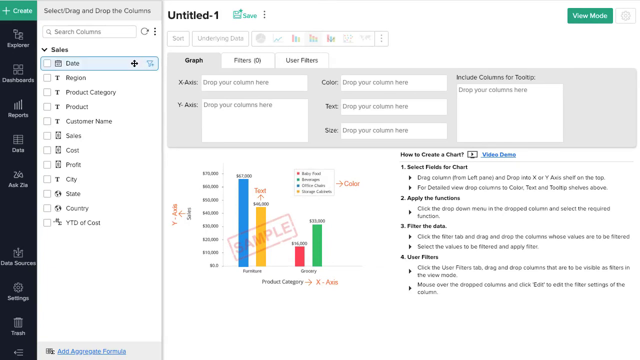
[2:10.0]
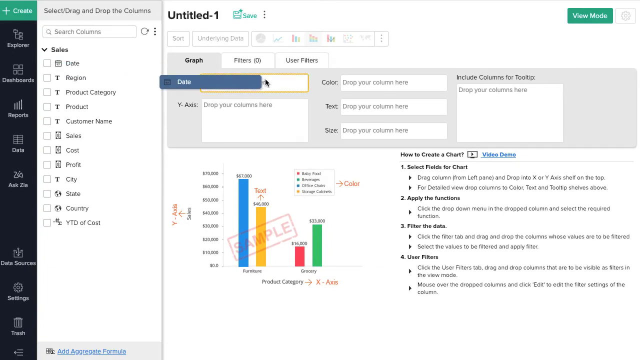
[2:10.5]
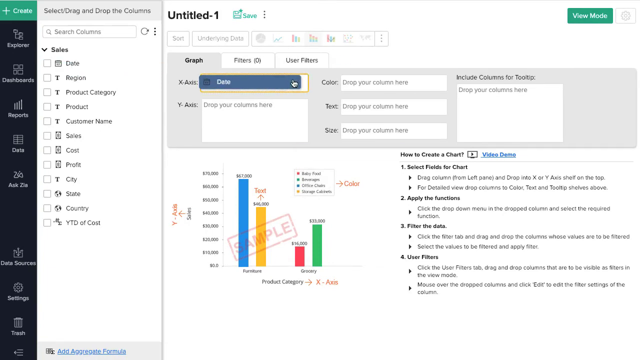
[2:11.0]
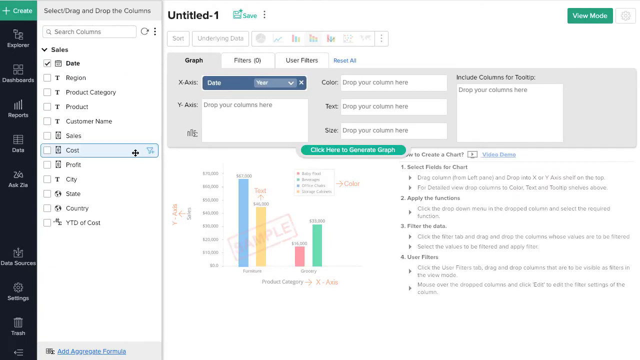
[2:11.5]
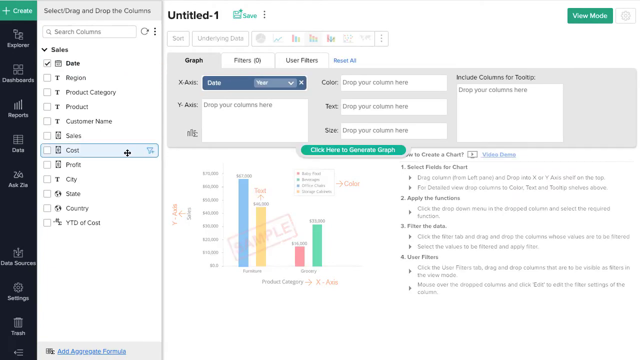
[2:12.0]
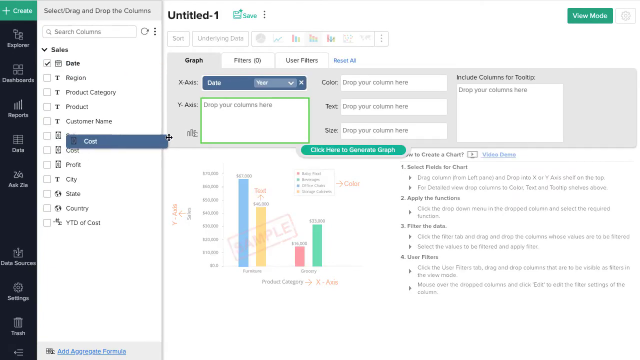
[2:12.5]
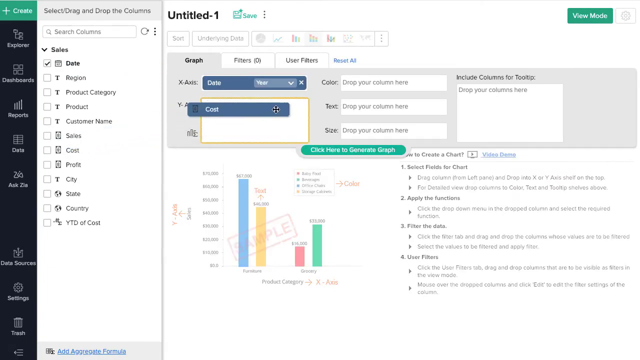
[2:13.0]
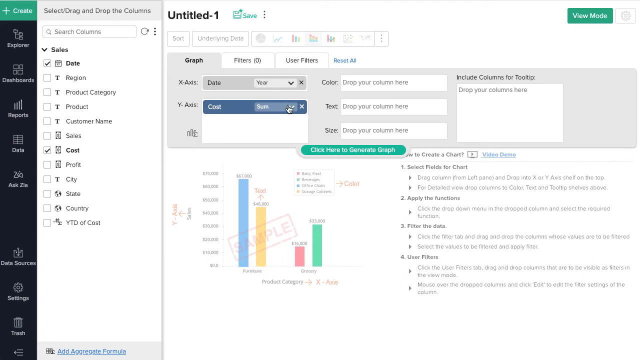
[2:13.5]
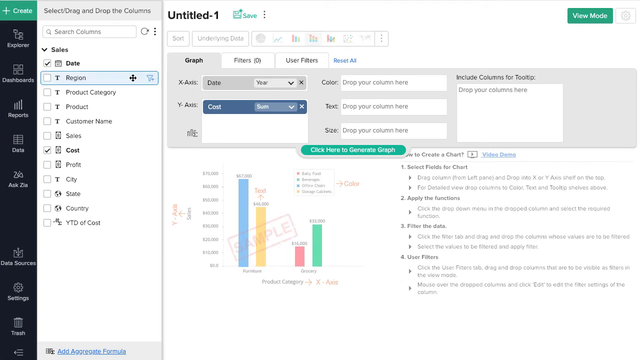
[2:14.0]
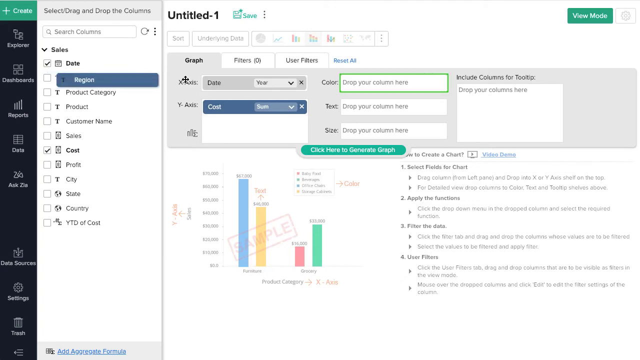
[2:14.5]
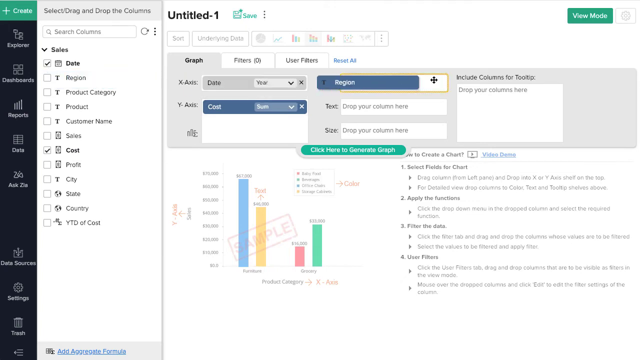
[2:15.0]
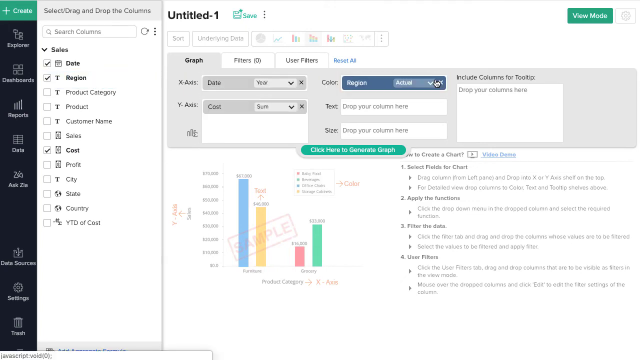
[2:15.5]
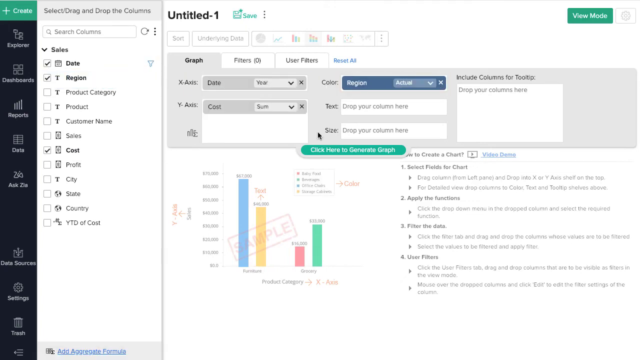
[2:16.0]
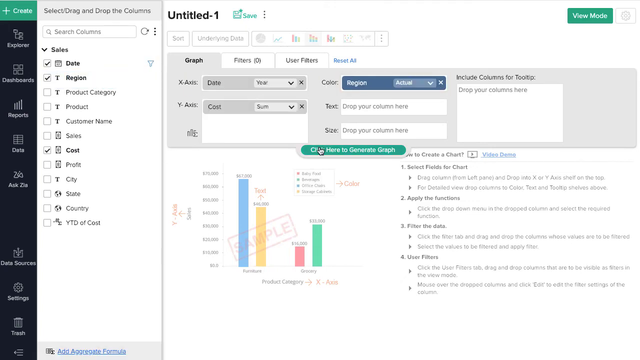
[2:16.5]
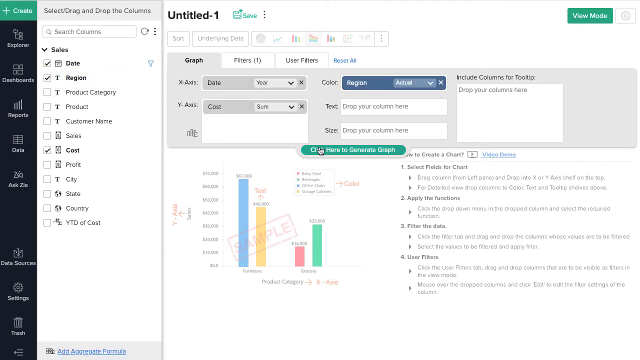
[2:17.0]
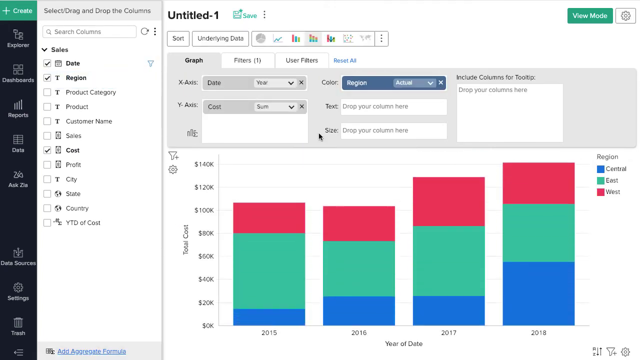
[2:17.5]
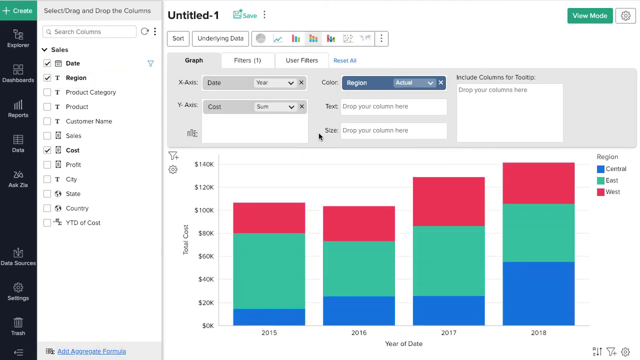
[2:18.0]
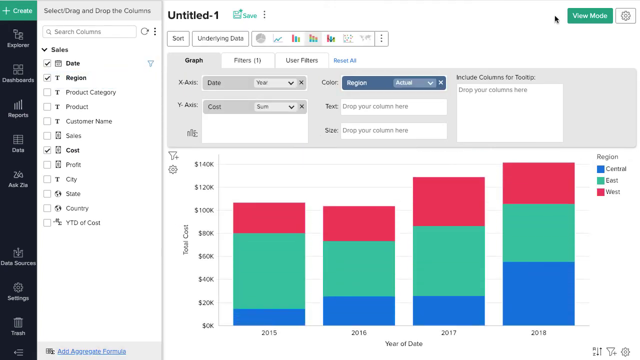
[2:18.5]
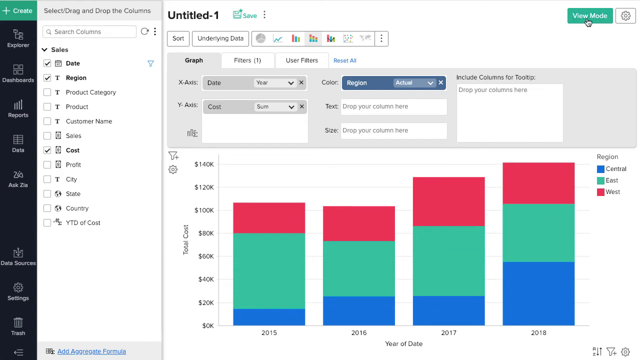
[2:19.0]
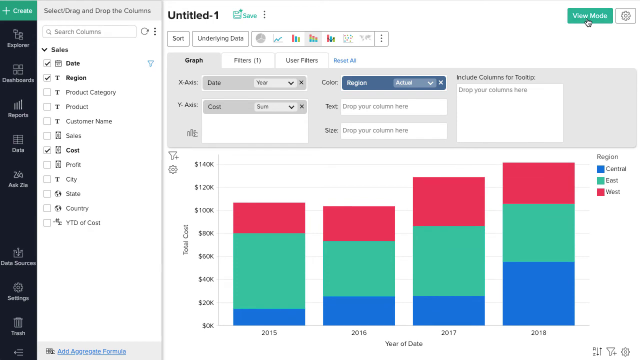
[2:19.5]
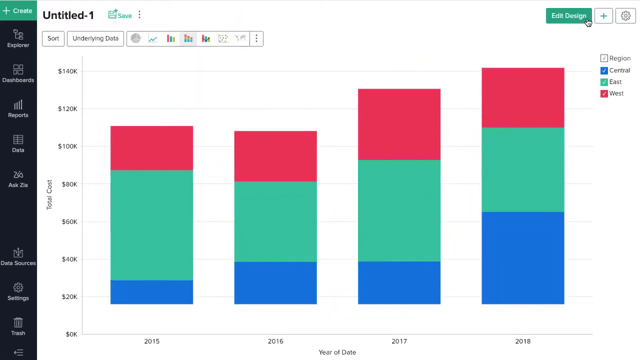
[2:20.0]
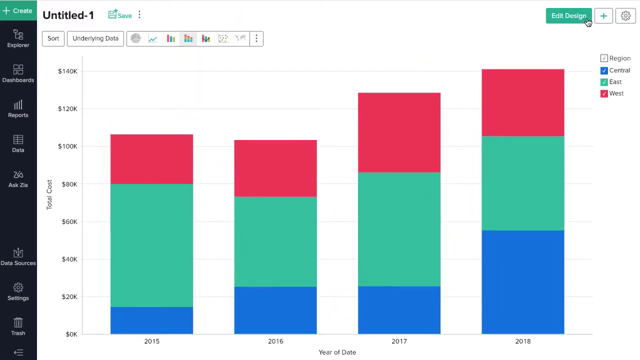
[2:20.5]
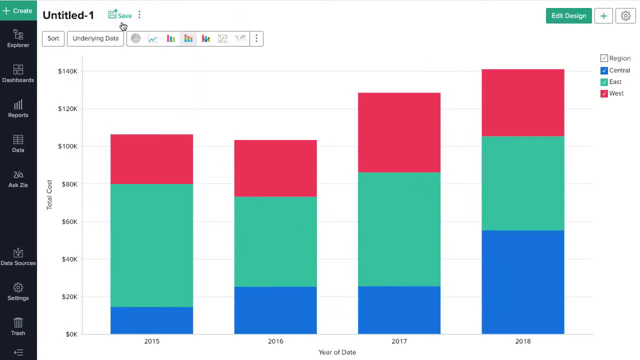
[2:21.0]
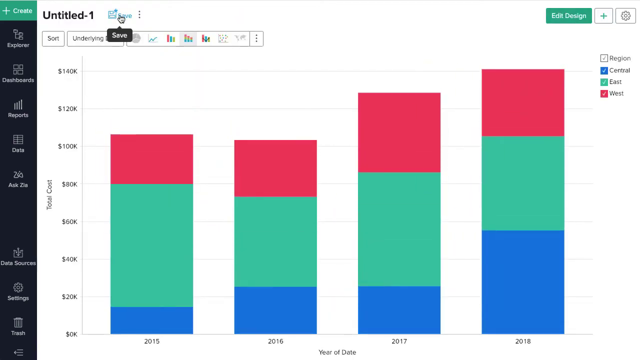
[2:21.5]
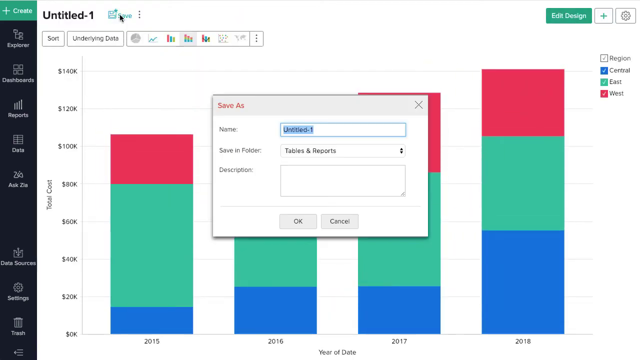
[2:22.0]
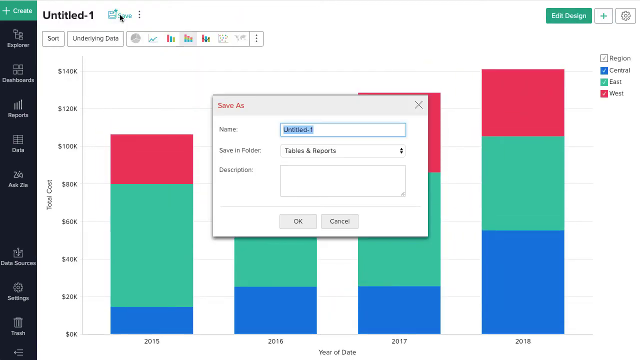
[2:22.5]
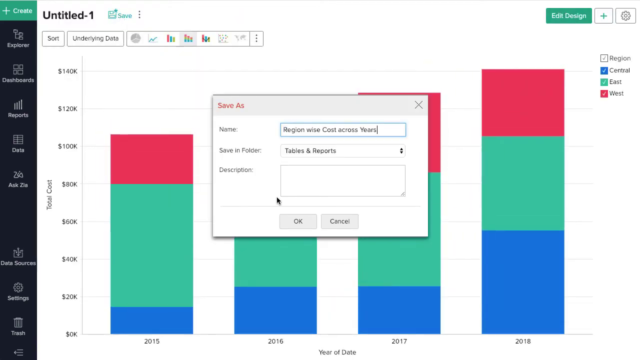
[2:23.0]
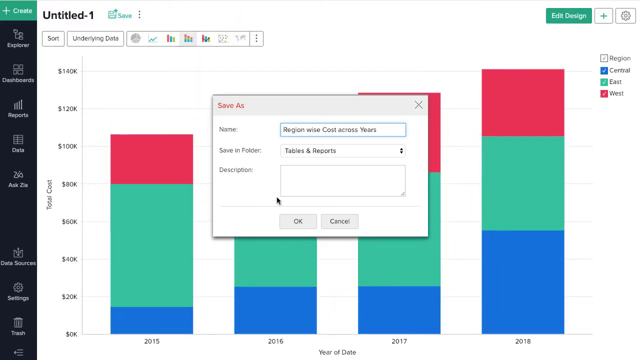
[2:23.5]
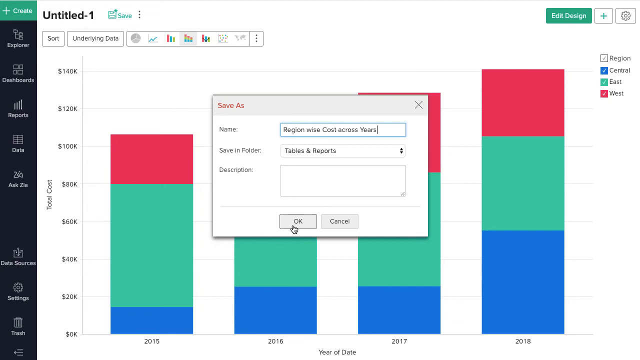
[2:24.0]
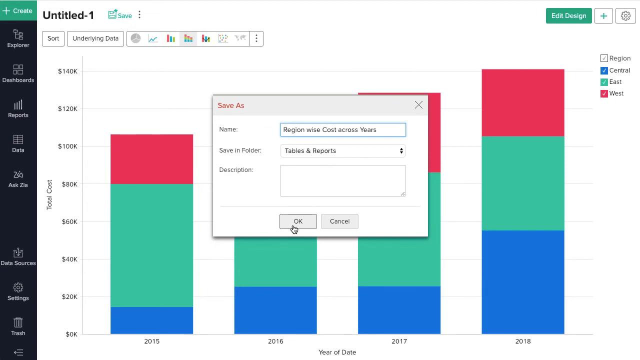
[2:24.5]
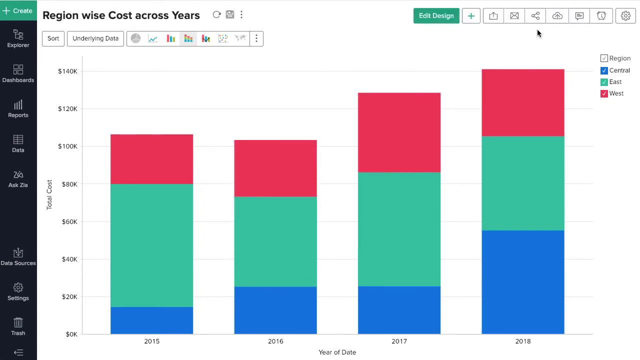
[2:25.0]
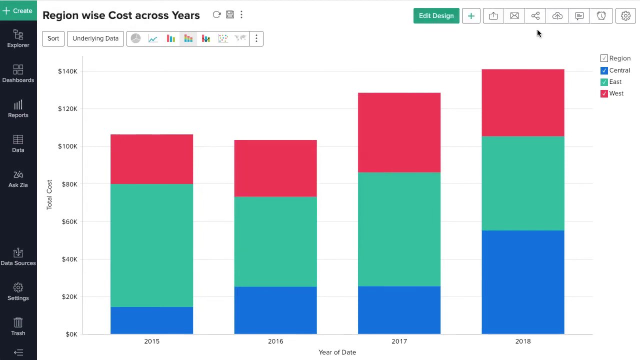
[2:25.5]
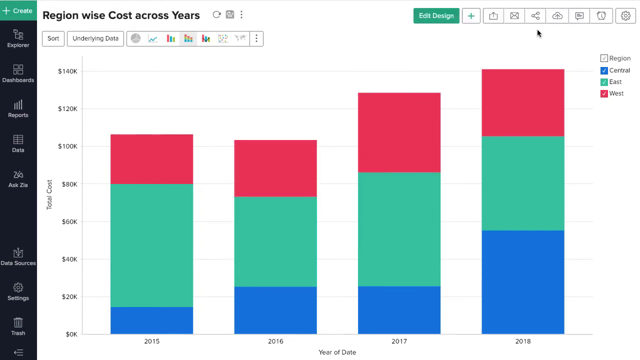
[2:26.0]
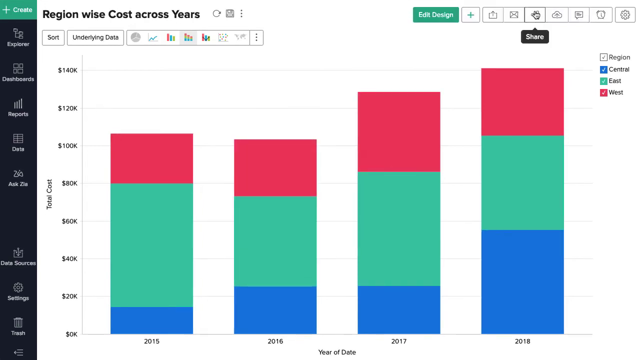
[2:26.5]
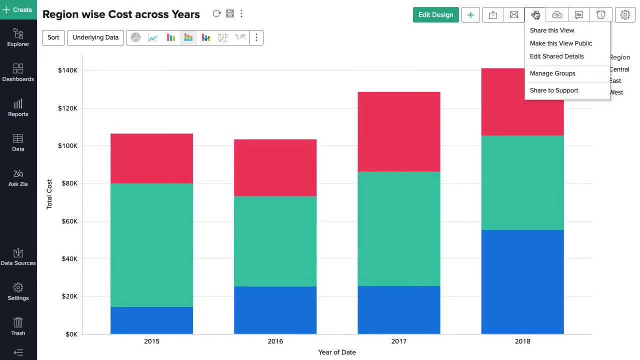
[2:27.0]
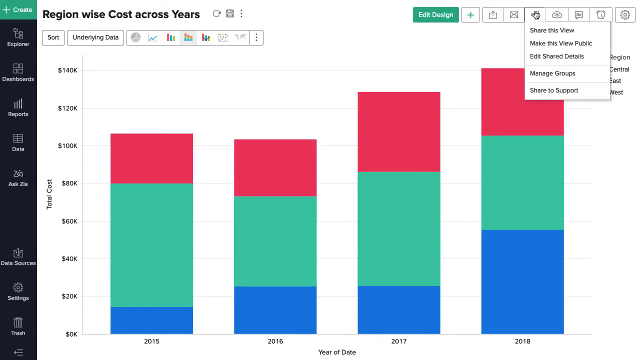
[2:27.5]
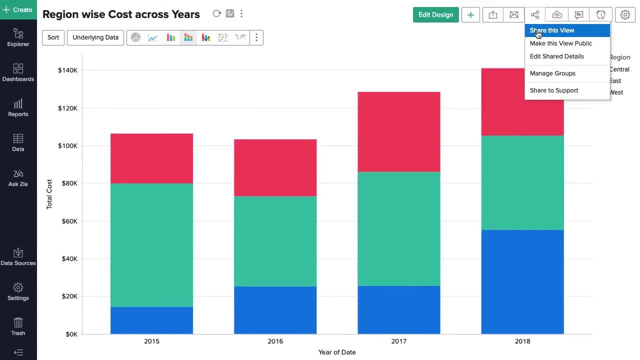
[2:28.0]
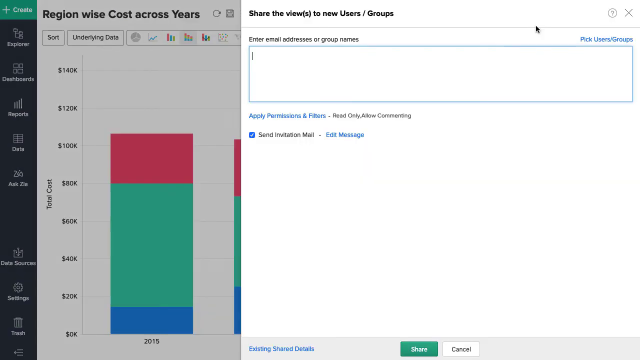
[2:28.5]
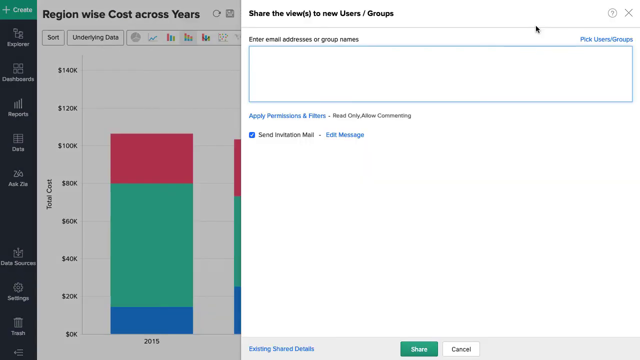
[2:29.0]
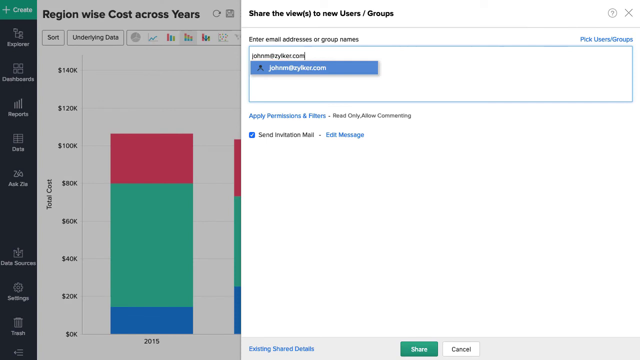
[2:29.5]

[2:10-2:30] A page titled "untitled one" at the top in black text shows boxes and graphs. The cursor drags sections such as cost, date and region over to the boxes. The person clicks a button that generates four graphs at the bottom, with blue, teal and pink rectangles, apparently showing some kind of cost or expenses. They click a button that says "view mode"; another button says "edit design". The person clicks the save button at the top of the page, enters a name and clicks OK, then hovers over a button that says "share". A list appears, they click "share this view", and a screen appears that says "share the views to new users / groups", with a box where they enter an email address, all in black text on a white background. On the left side of the screen are more buttons: "create" at the top in white text on a green background, then a teal background, then a dark blue background. The rest is a sidebar with icons and text for items such as Explorer, dashboards, reports, data and Ask Zo, hard to see because the text is small.